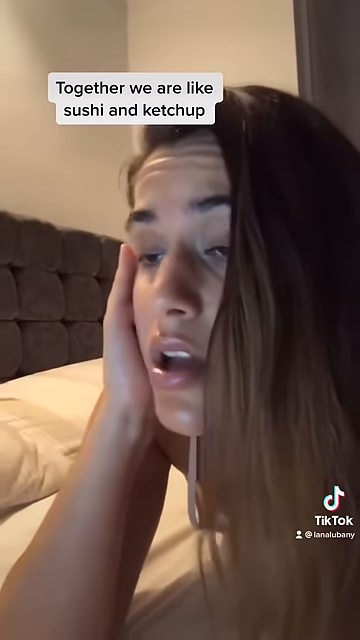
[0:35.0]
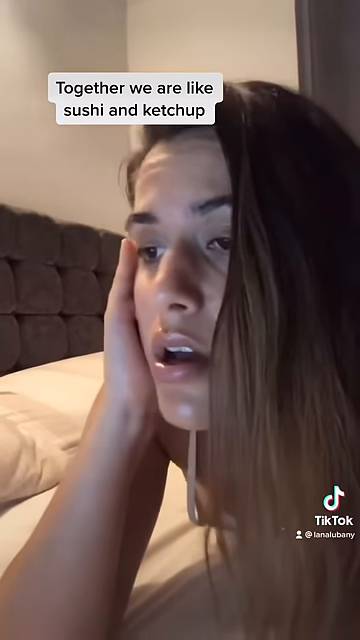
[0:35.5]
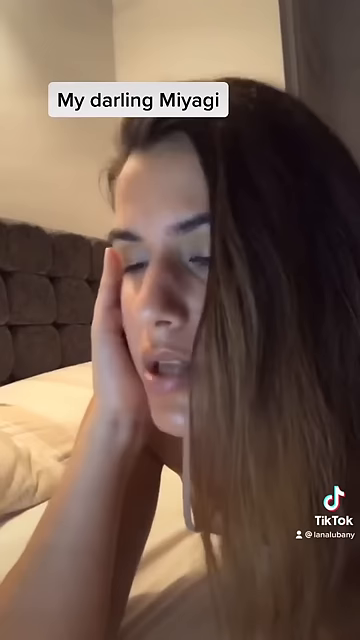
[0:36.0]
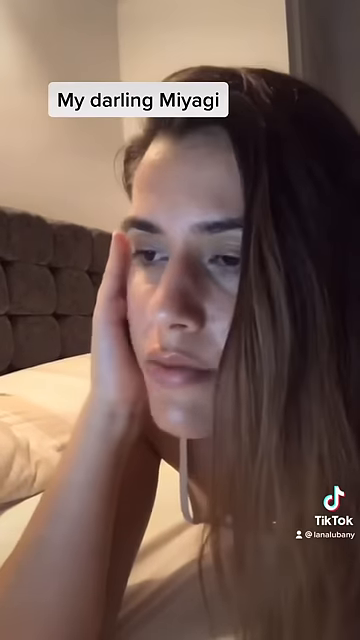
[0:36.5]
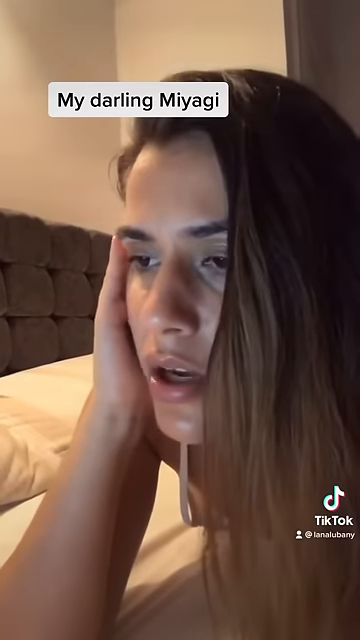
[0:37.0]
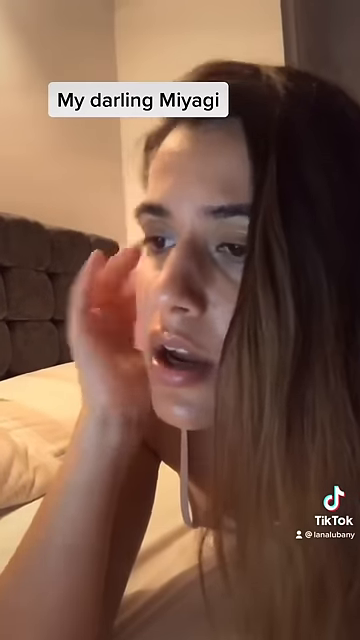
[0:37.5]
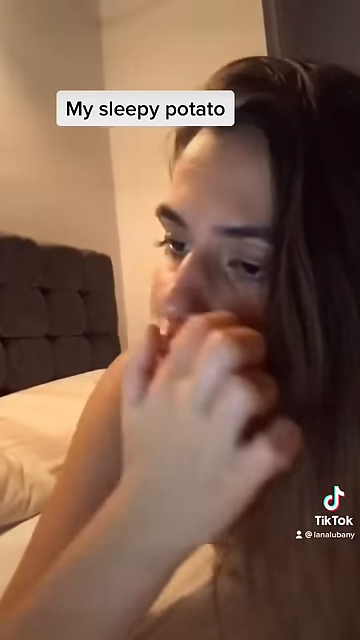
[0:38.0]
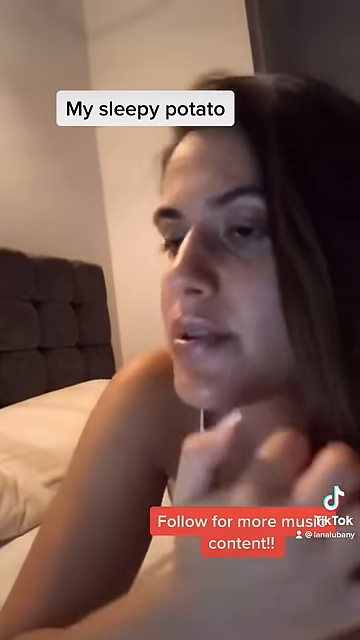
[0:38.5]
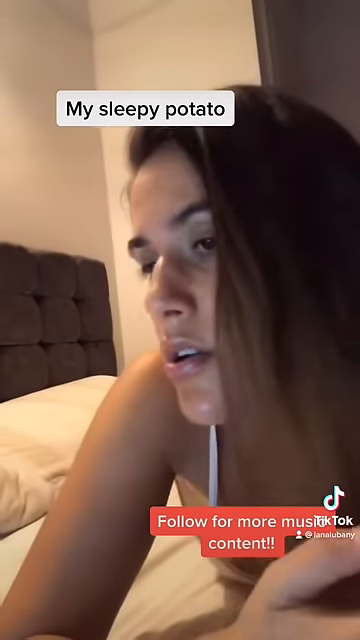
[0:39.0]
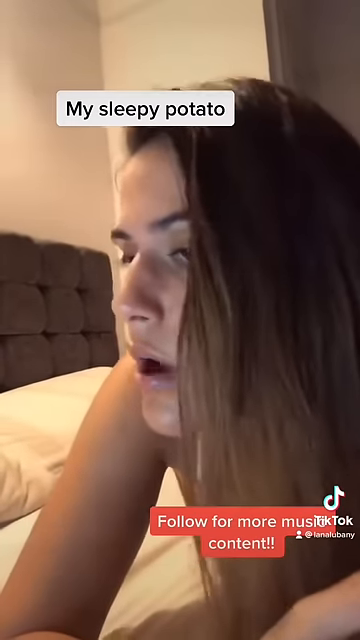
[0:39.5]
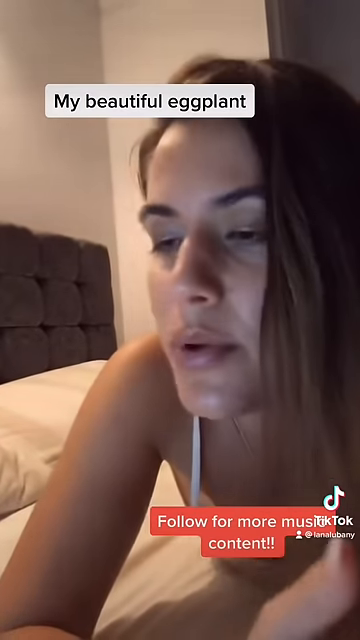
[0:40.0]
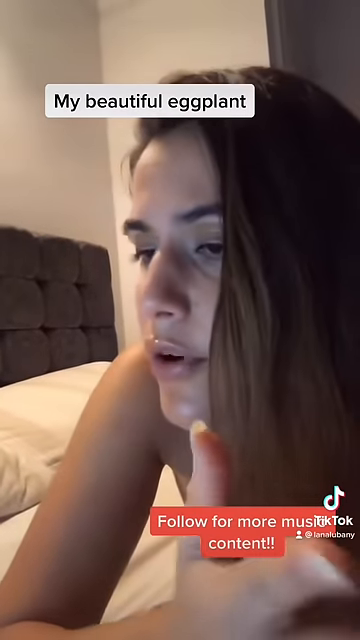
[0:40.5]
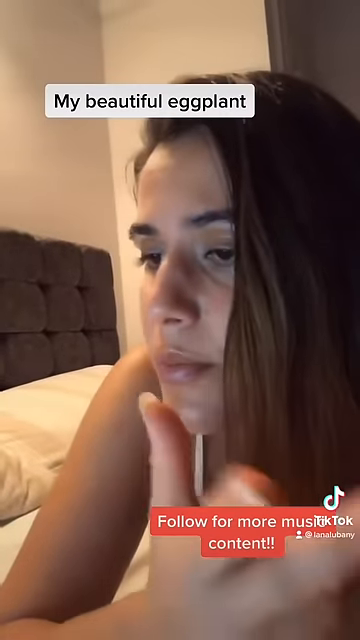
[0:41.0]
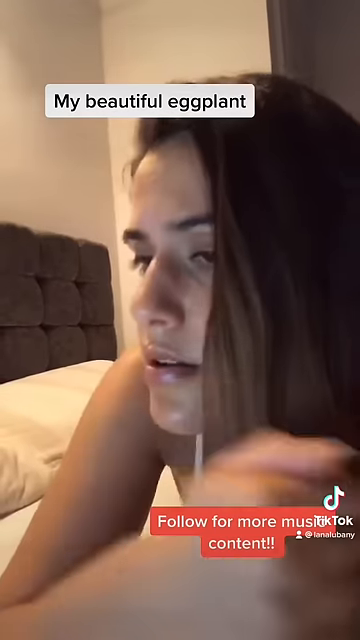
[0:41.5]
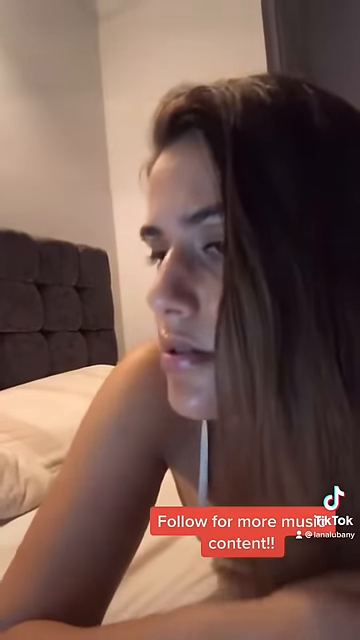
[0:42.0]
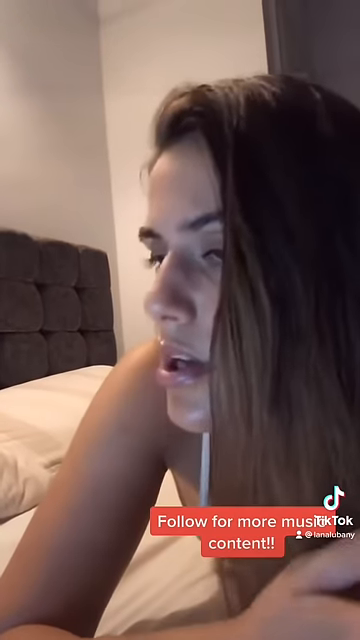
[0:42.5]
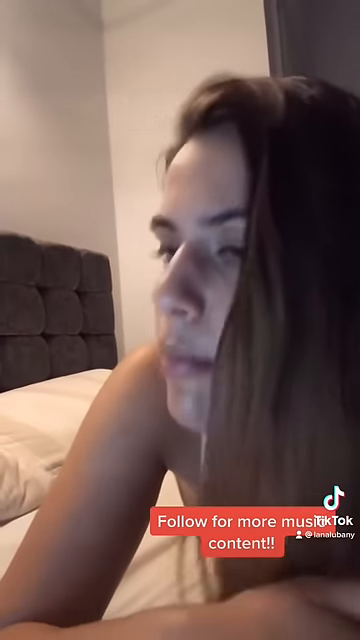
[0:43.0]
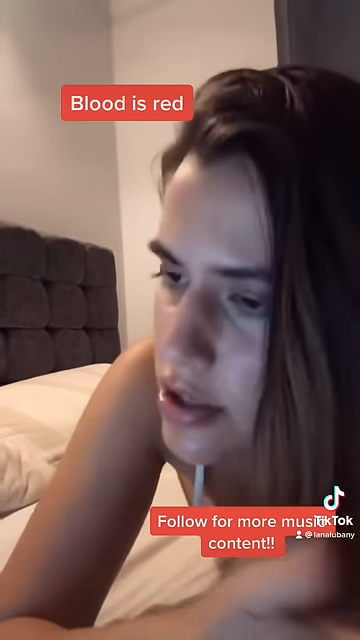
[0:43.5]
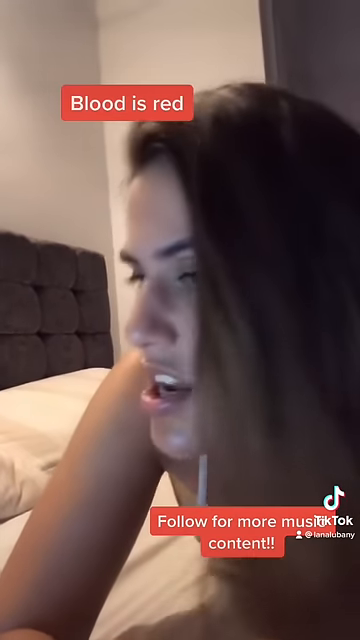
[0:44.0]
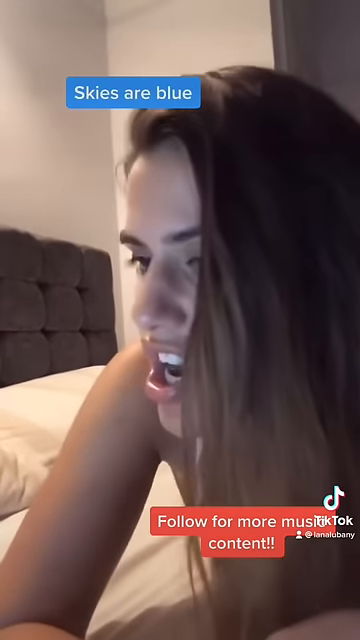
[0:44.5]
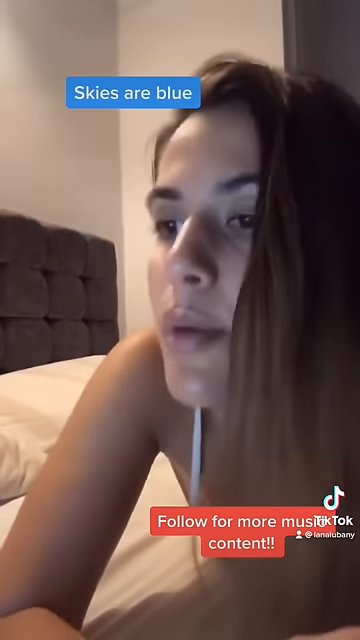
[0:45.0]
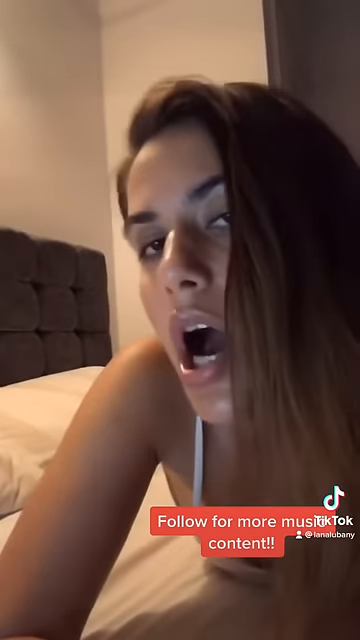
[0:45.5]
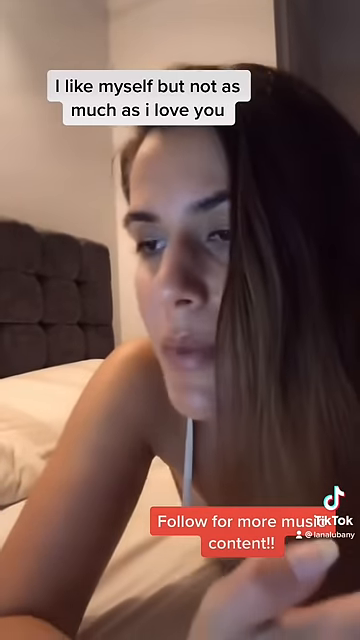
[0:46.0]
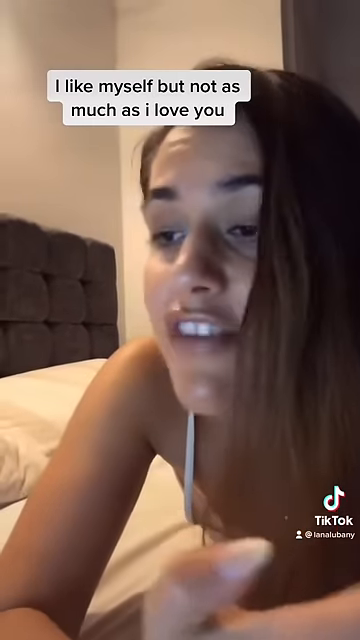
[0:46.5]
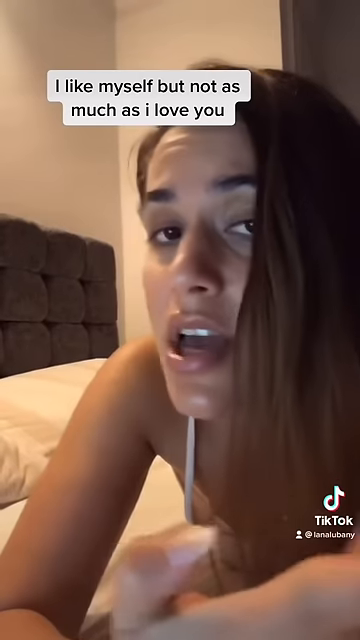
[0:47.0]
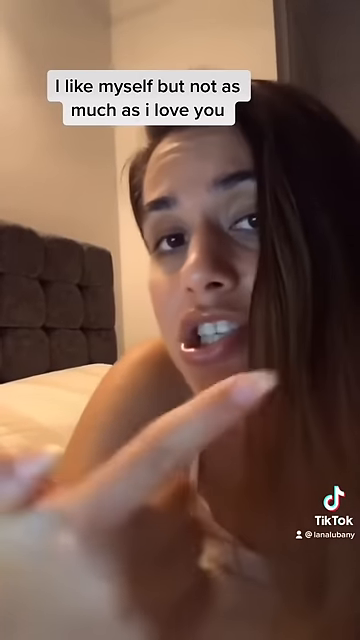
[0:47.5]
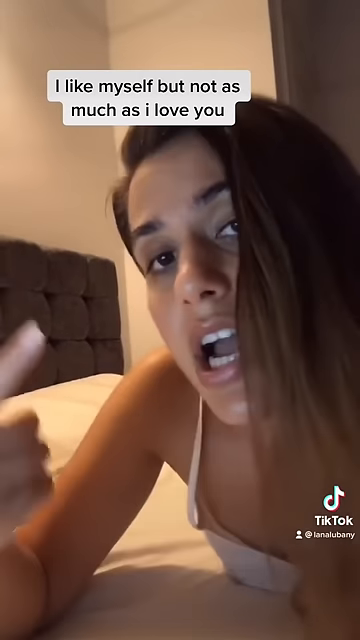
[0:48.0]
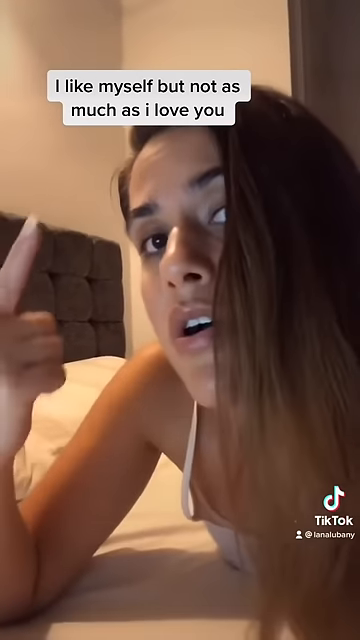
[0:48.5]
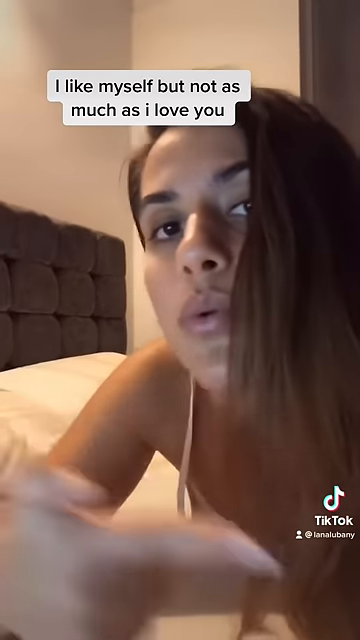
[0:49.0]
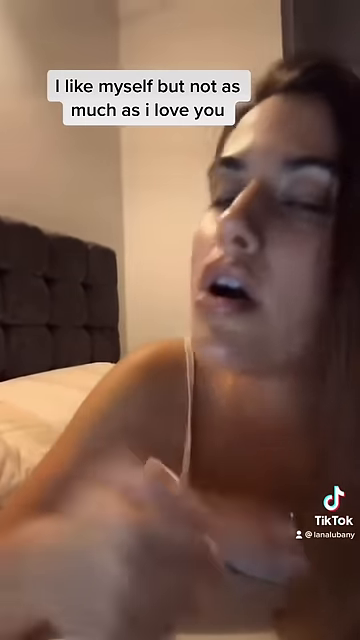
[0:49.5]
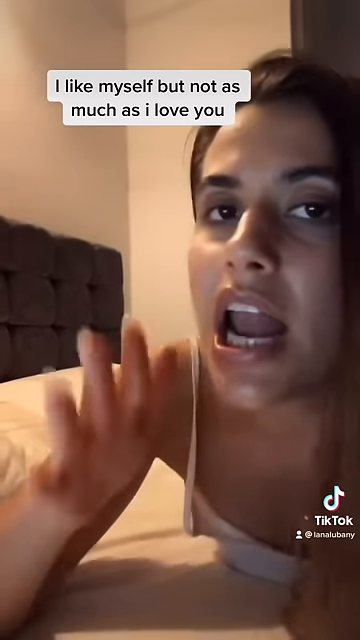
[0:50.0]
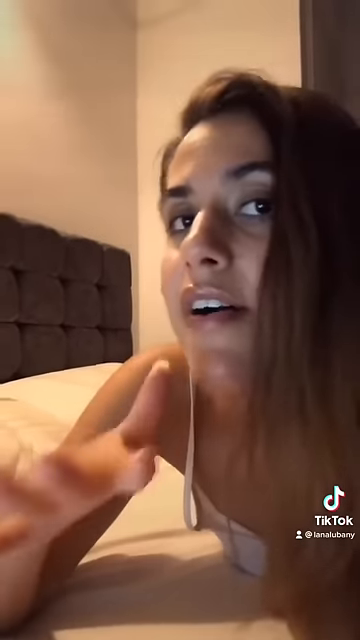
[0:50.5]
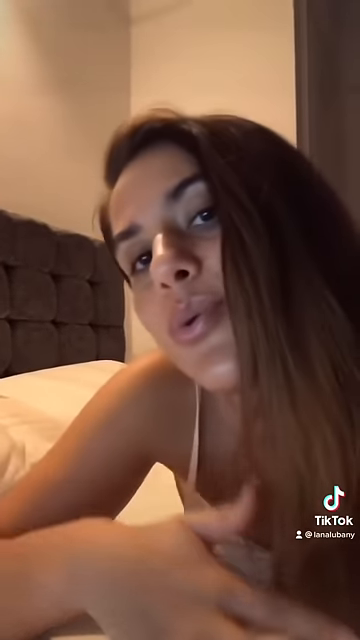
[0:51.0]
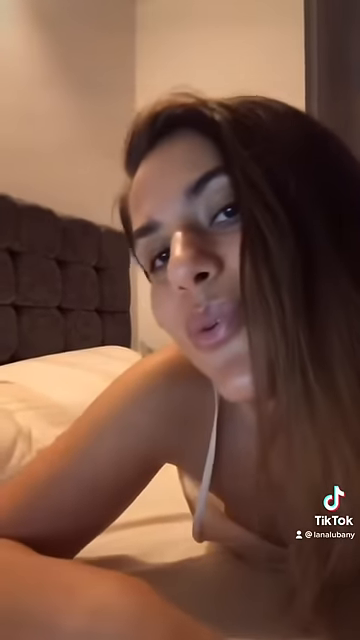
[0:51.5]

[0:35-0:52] The woman sings the song lyrics the program generated from the random words she typed in, recording herself while lying down on a bed. She looks bored. She looks kind of Mexican, and her skin looks kind of greasy. The video ends abruptly.